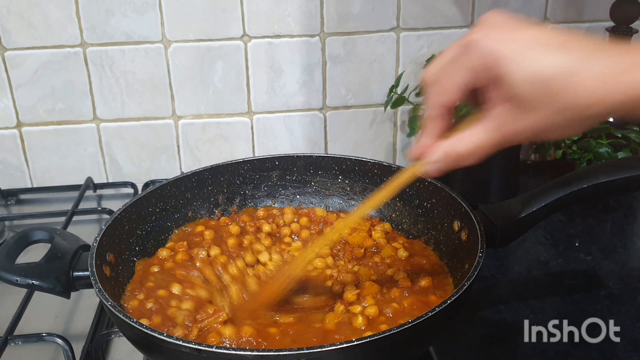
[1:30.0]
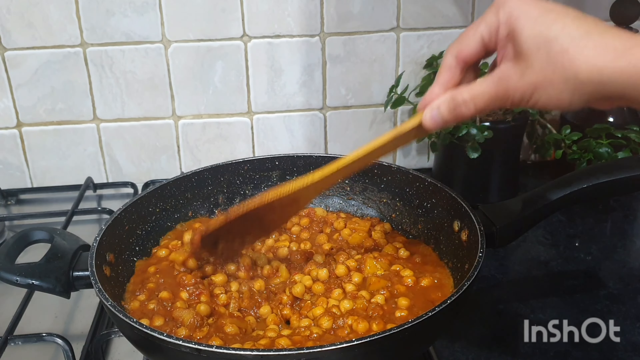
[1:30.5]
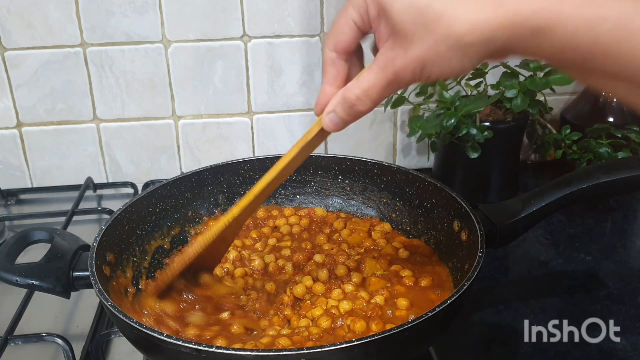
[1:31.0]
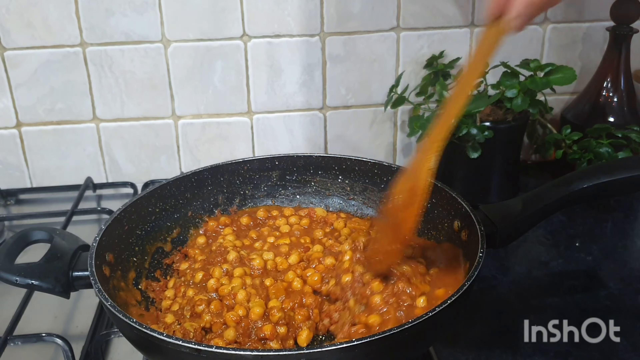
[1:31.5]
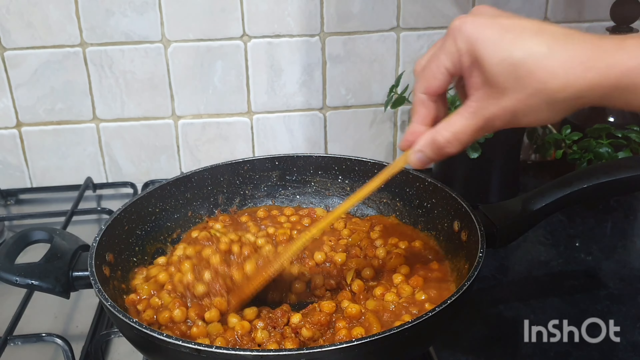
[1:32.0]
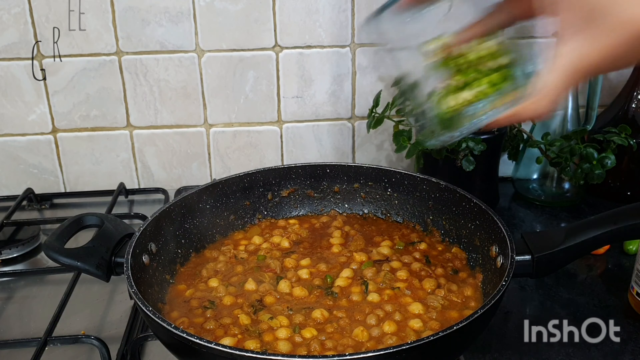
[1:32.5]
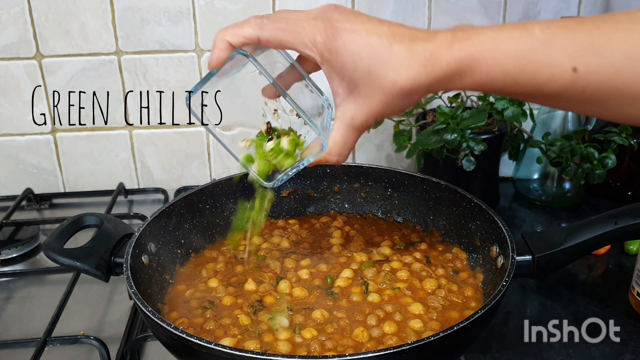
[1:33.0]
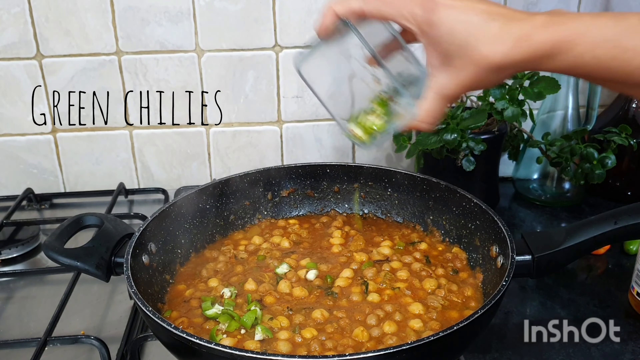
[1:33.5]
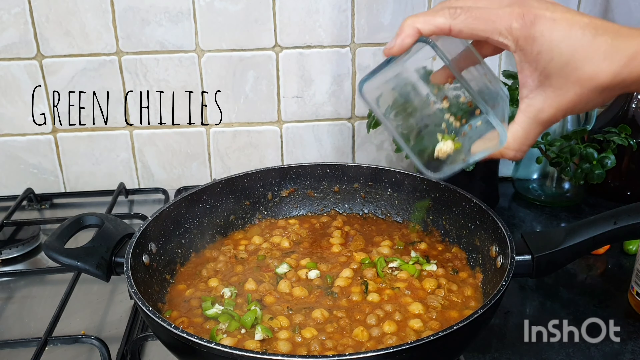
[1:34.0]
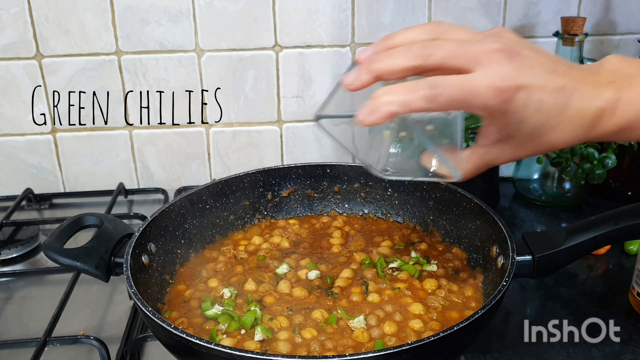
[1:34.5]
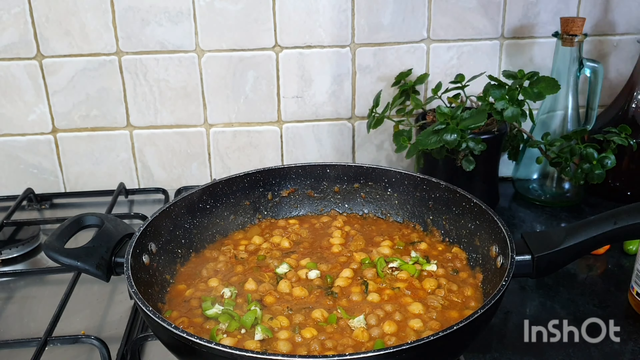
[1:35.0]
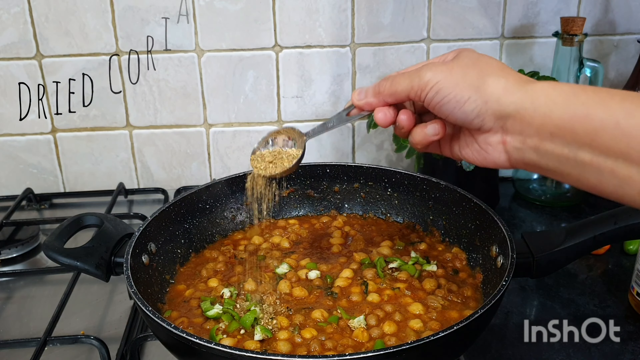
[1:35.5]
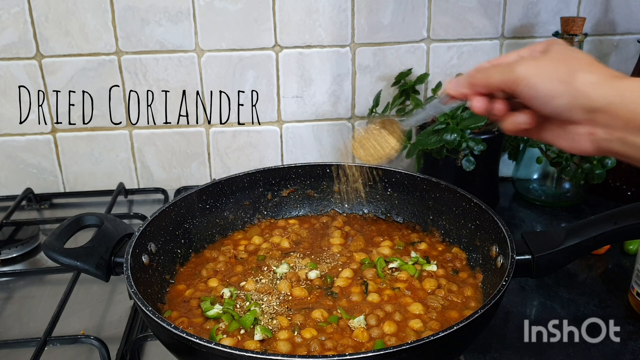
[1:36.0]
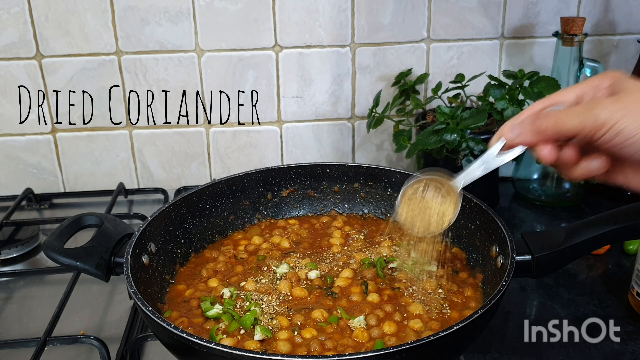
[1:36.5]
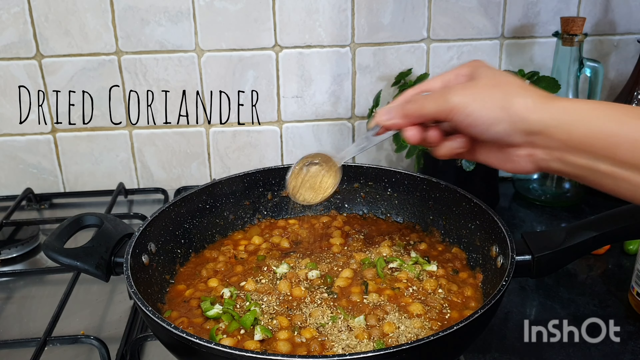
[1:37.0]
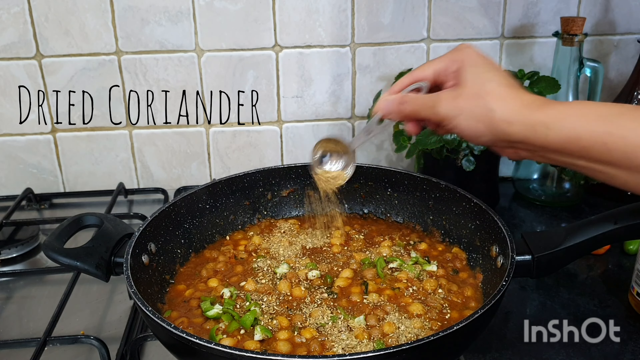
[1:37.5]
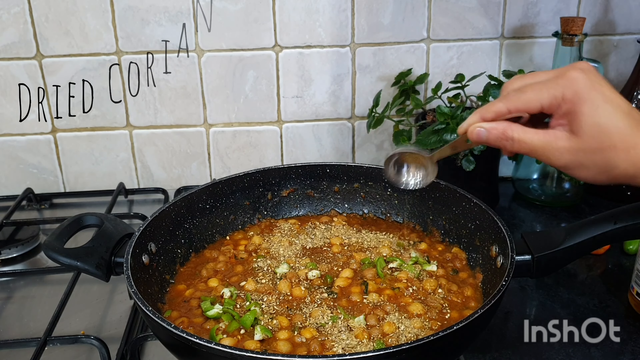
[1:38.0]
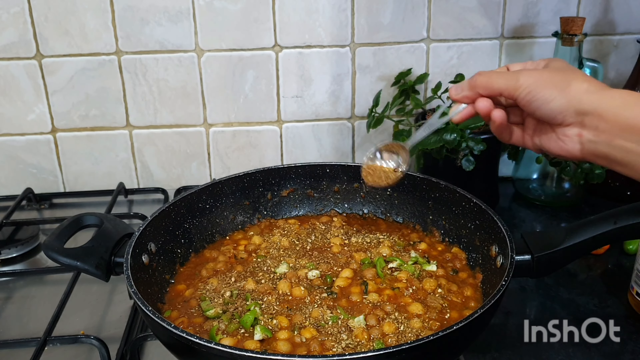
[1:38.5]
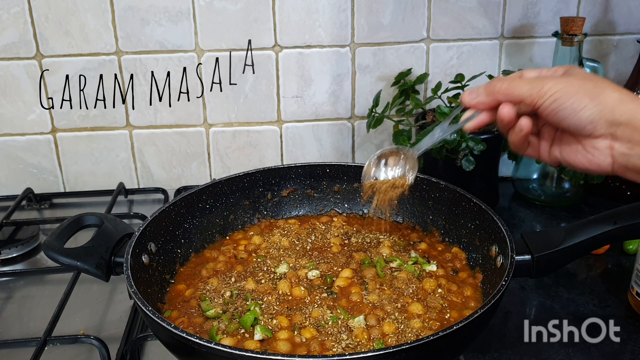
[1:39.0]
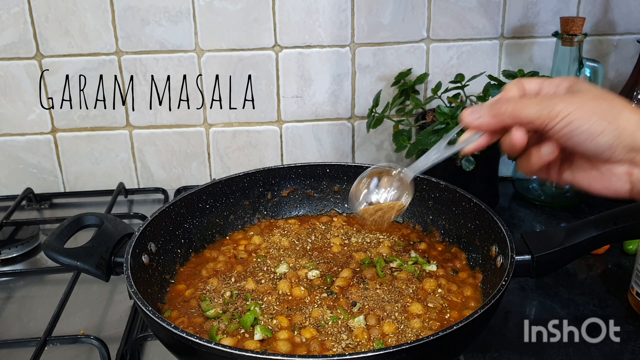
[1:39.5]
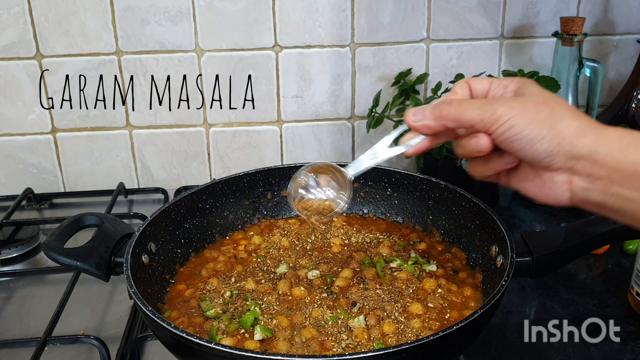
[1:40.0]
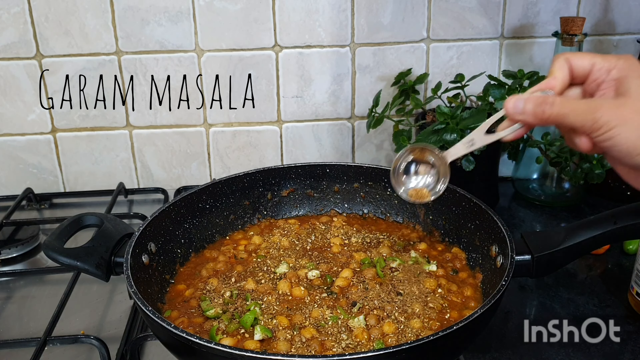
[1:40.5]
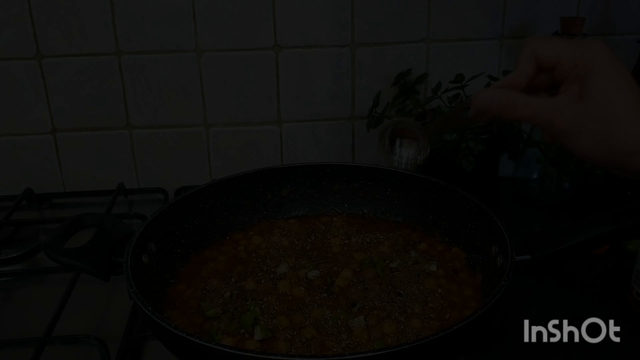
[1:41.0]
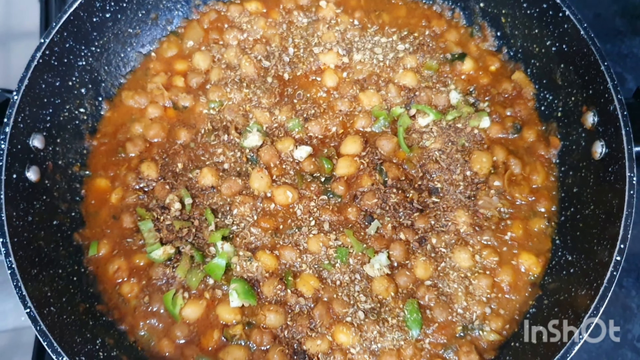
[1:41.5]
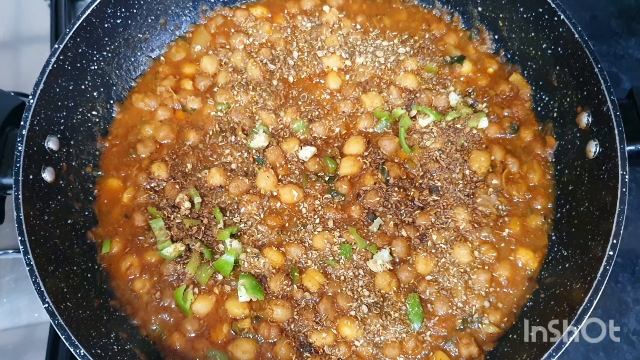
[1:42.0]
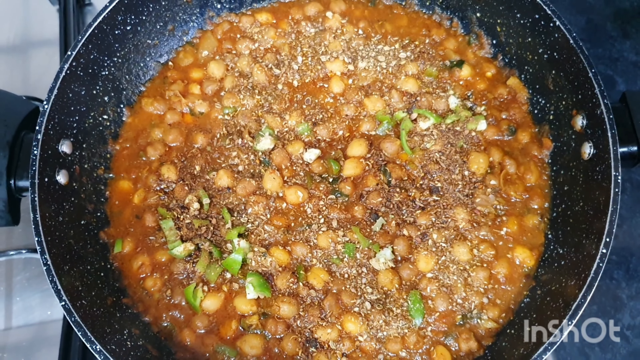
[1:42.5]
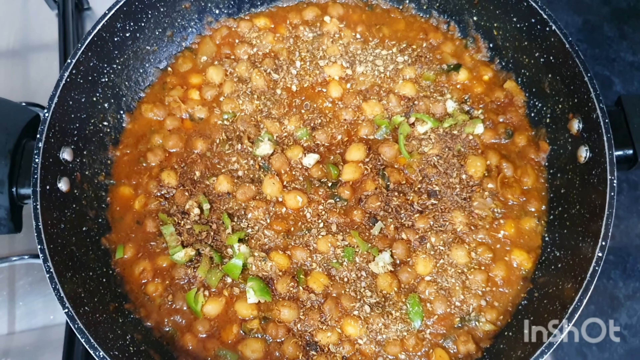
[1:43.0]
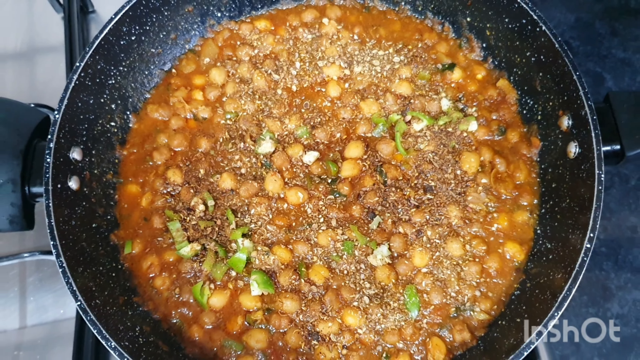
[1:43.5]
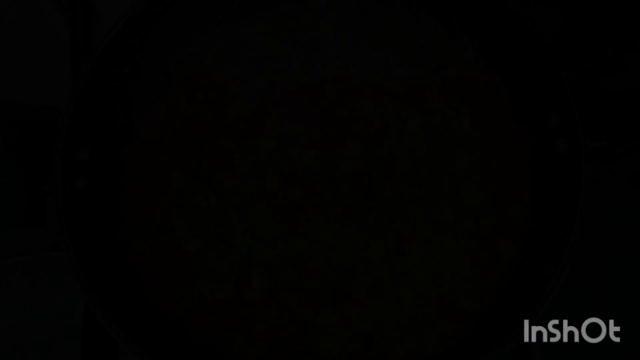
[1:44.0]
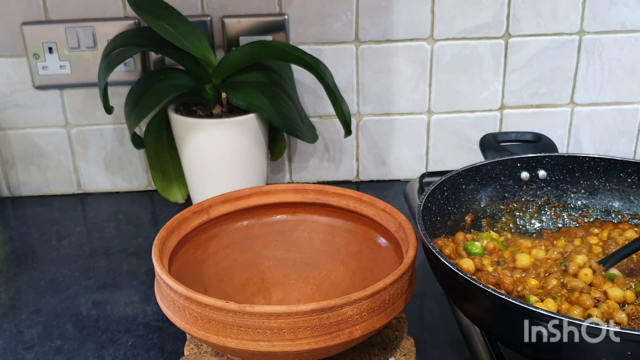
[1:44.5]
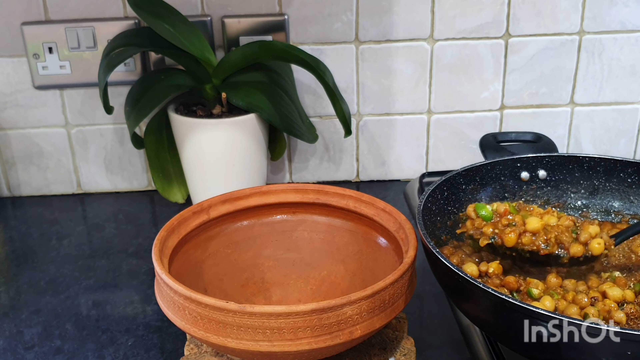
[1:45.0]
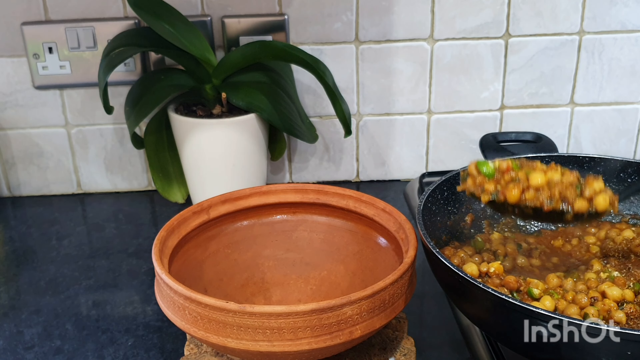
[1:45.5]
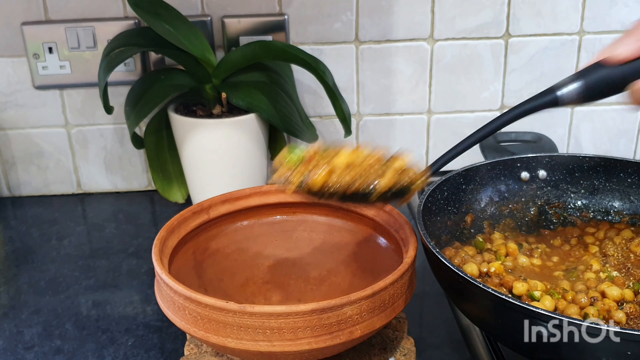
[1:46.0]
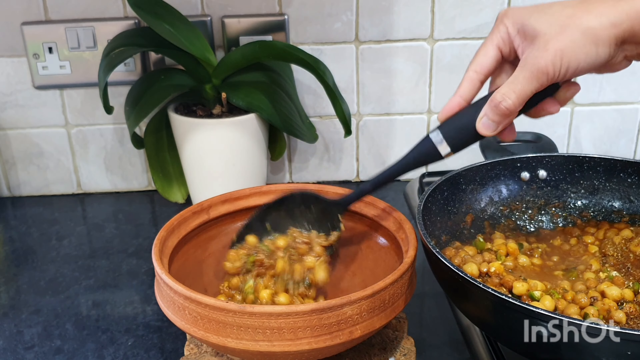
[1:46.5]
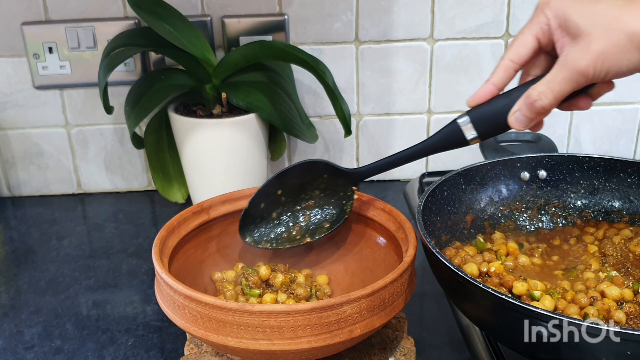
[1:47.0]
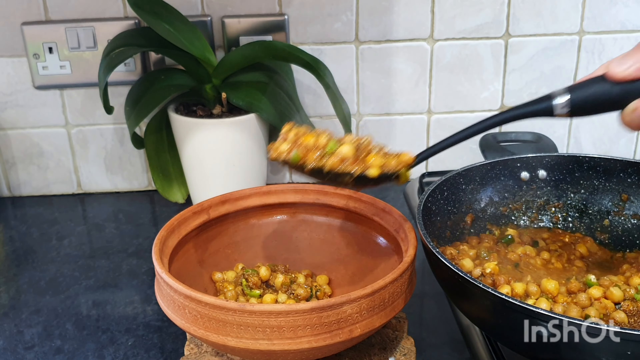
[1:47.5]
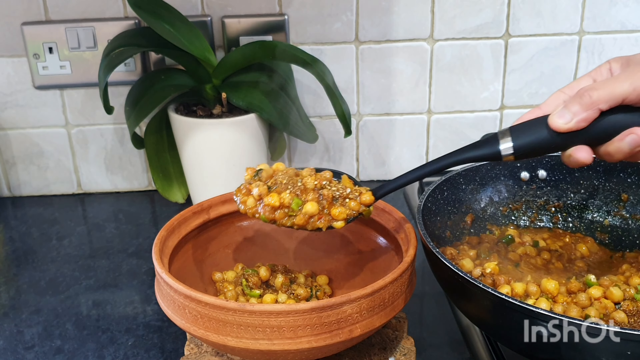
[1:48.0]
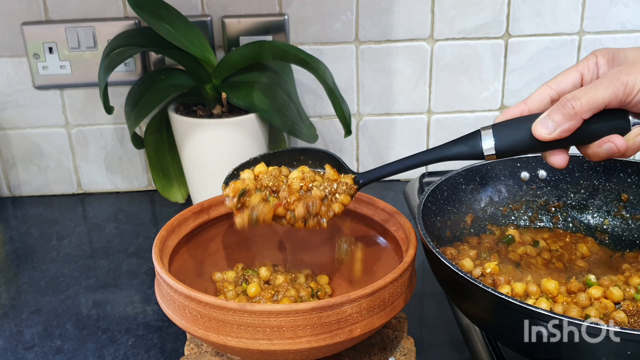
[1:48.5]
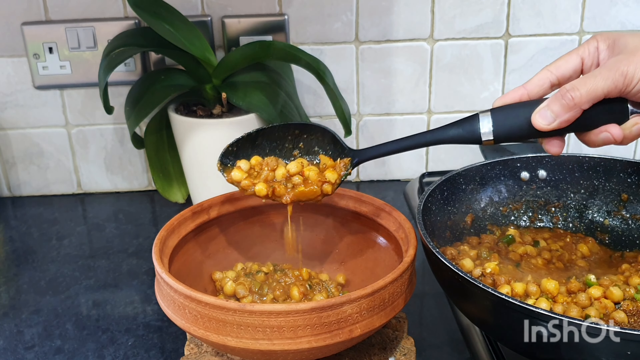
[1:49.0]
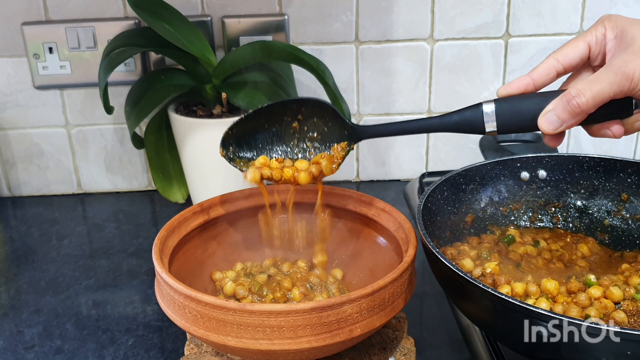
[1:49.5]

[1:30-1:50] The cook keeps stirring and moving the food. Green chilies, dried coriander and some garam masala are added. Back in the kitchen, the food is gently put into the tagine. There is not a lot of liquid left. There seem to be more plants behind the person's right hand, and the bottles and jars change. Another plant is behind the tagine the food is being put into. Next to the plant to the right of the cooking, the glass bottle has changed: it is now a tallish, clear glass bottle, whereas before the glass was less clear.